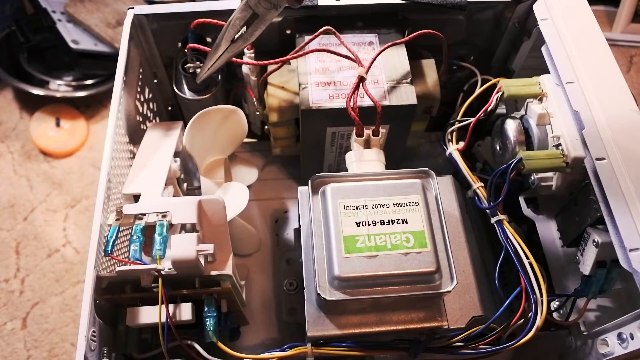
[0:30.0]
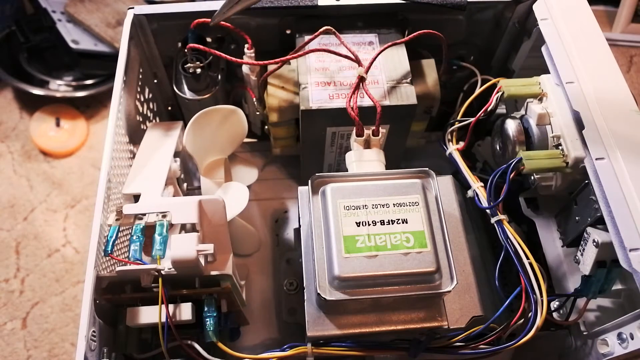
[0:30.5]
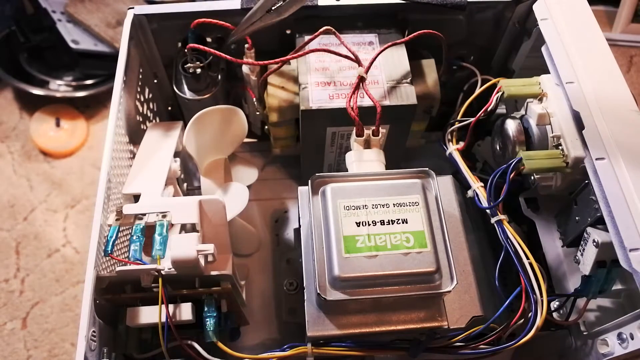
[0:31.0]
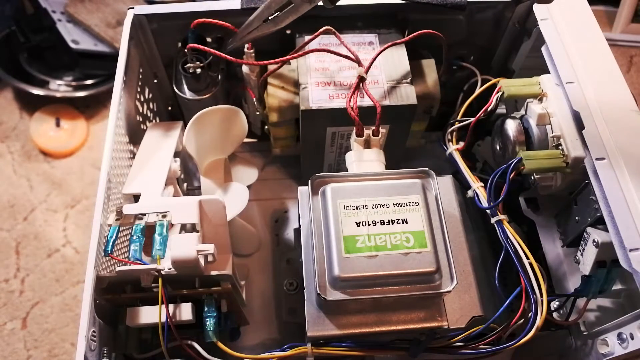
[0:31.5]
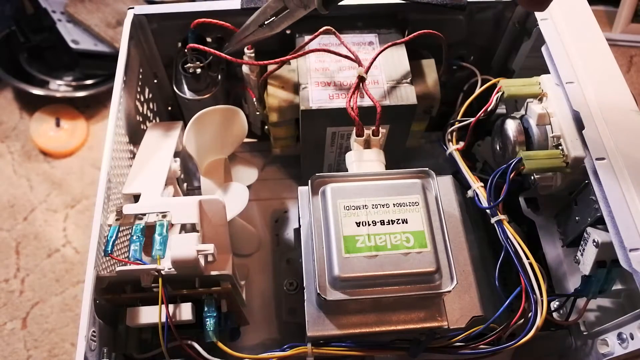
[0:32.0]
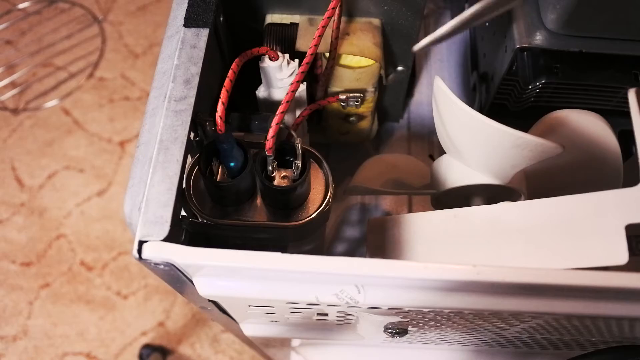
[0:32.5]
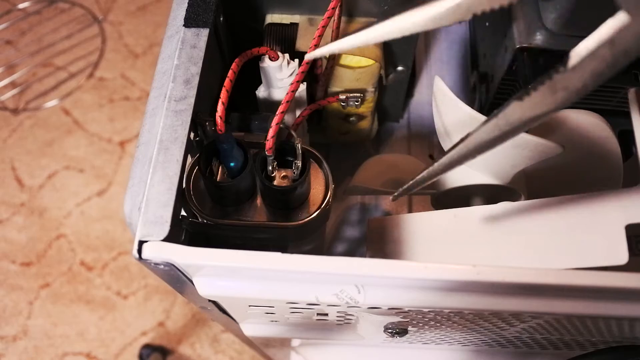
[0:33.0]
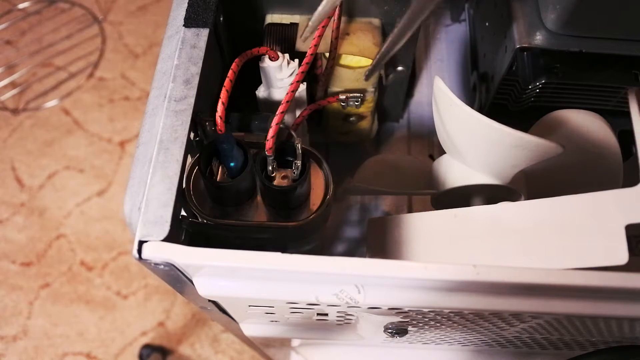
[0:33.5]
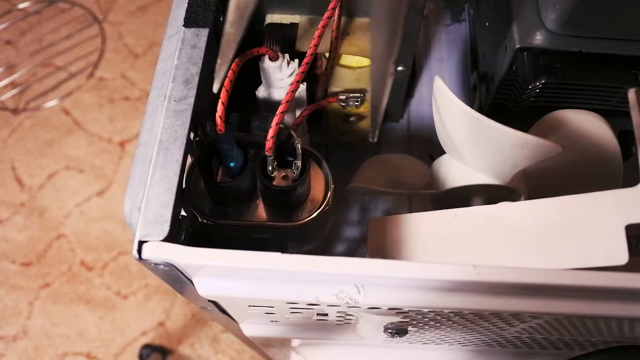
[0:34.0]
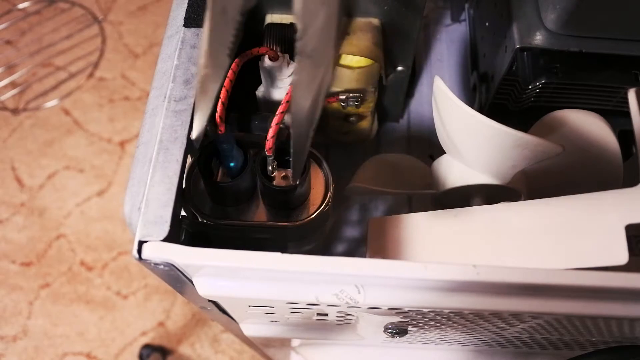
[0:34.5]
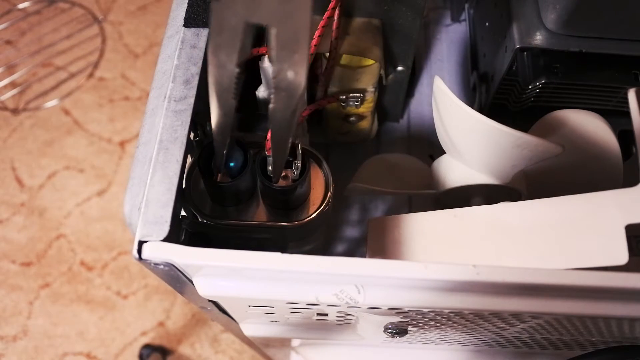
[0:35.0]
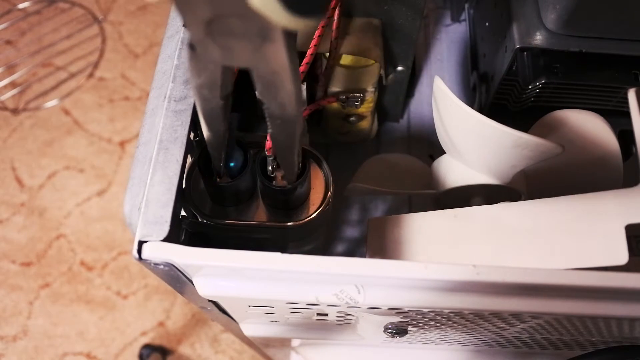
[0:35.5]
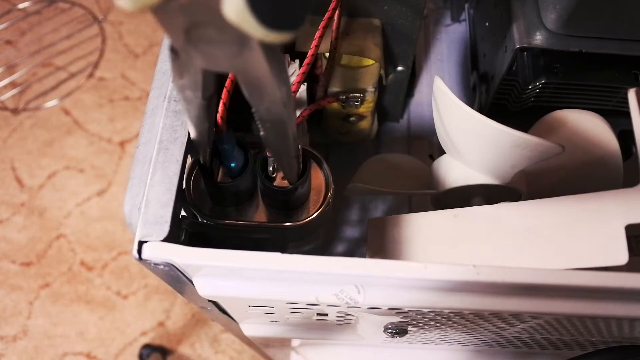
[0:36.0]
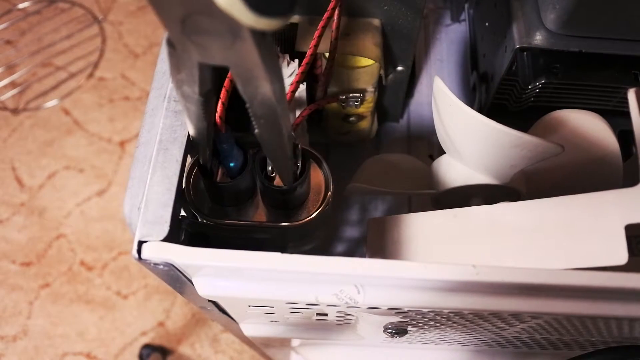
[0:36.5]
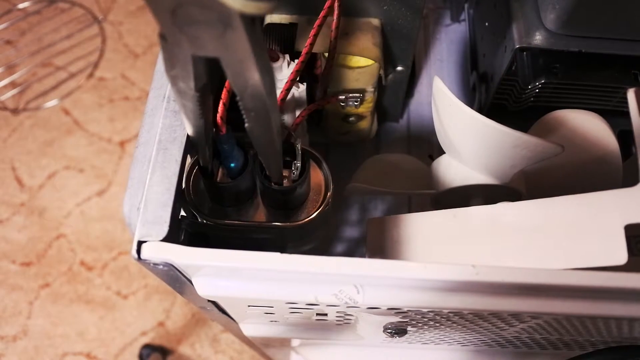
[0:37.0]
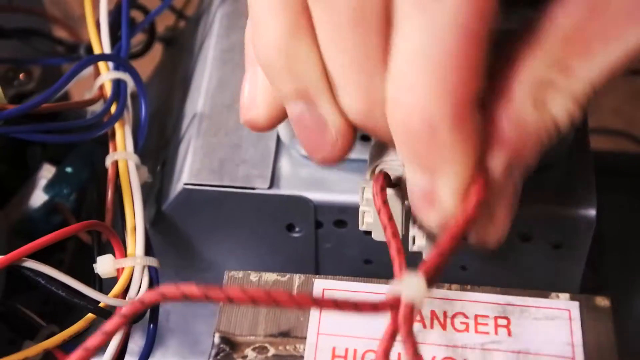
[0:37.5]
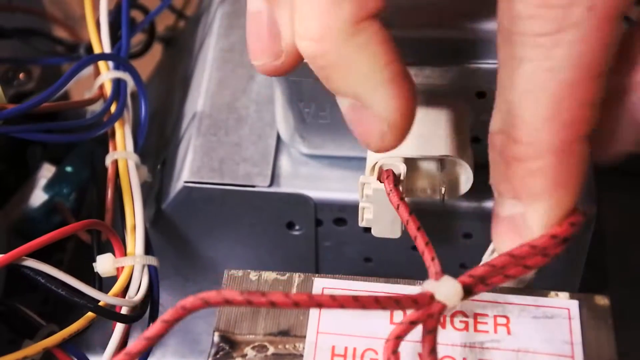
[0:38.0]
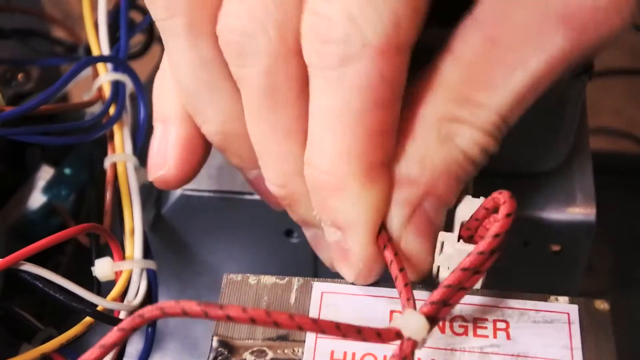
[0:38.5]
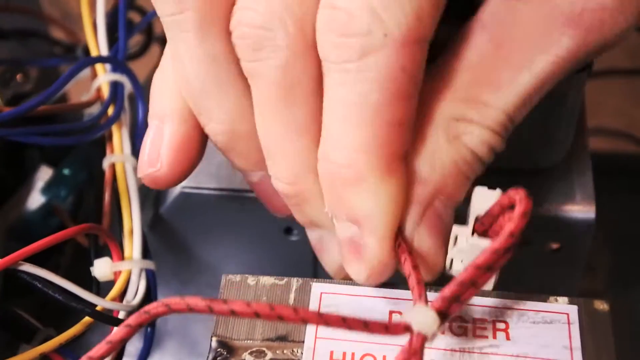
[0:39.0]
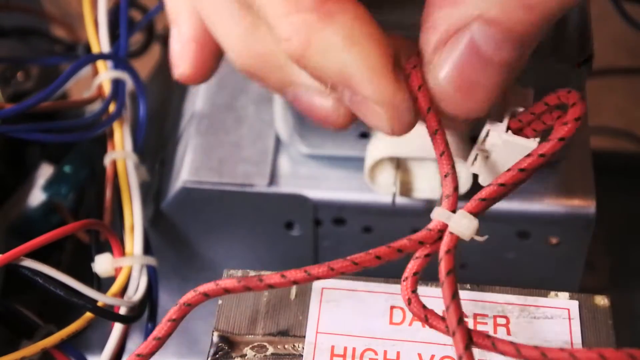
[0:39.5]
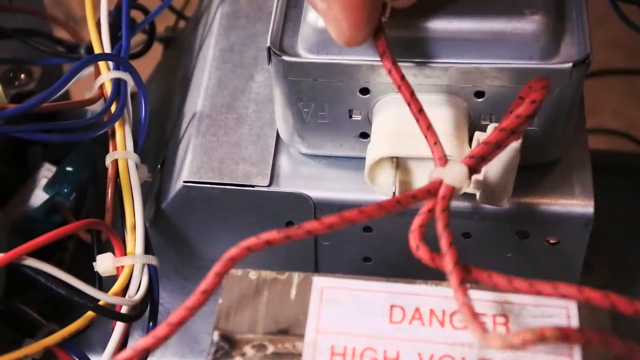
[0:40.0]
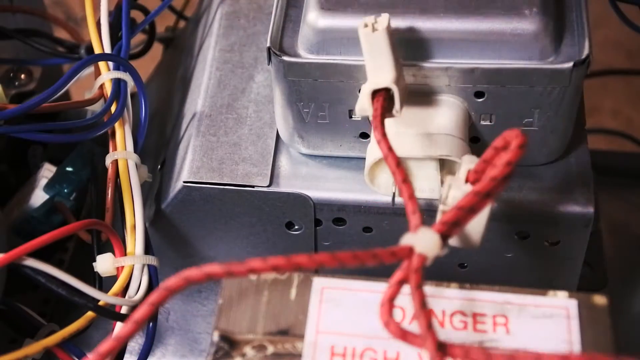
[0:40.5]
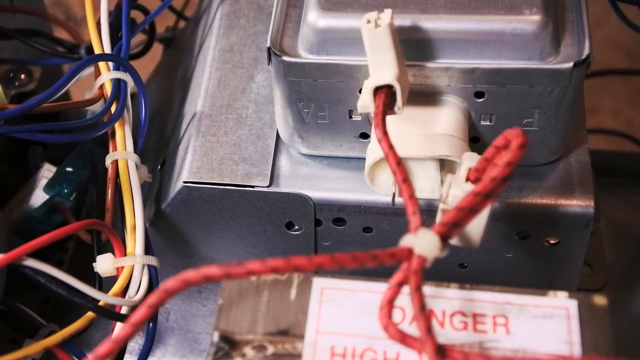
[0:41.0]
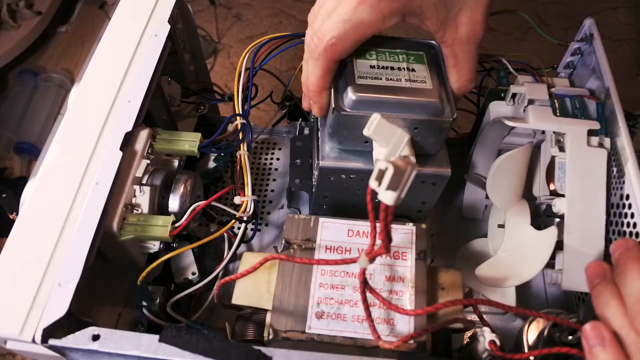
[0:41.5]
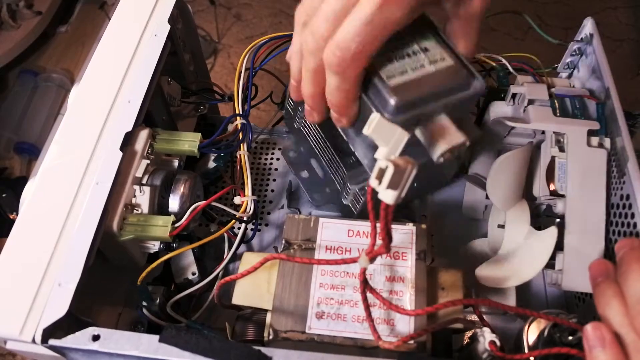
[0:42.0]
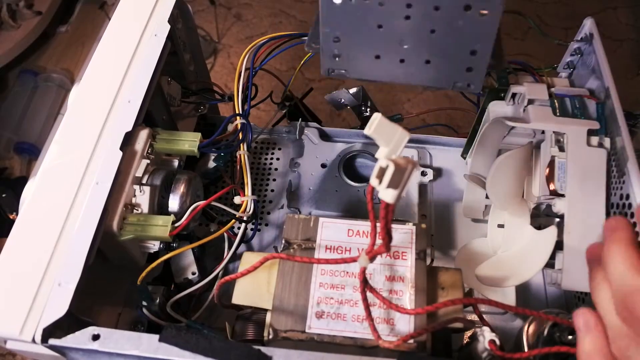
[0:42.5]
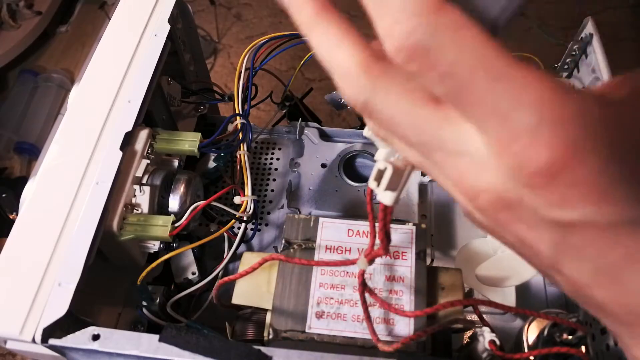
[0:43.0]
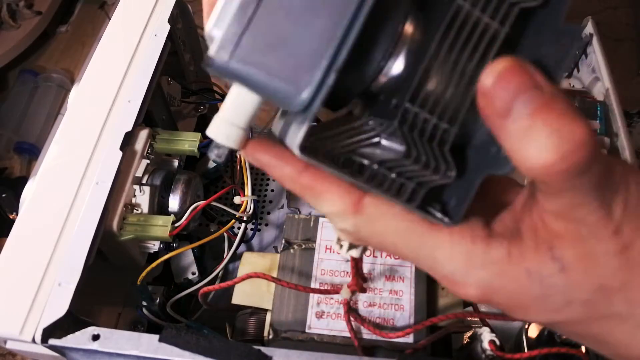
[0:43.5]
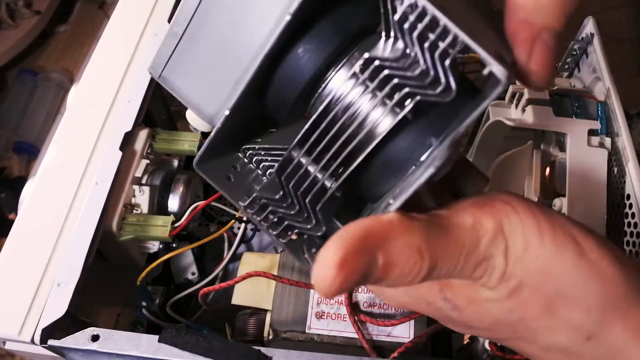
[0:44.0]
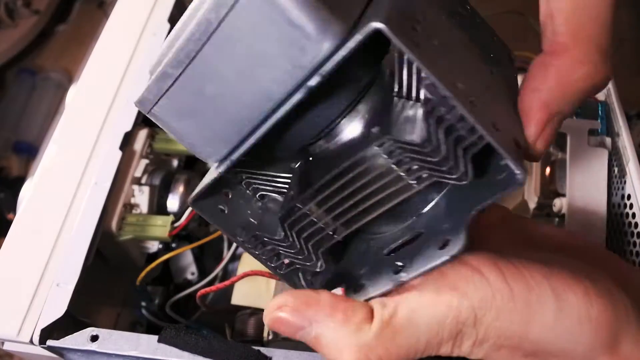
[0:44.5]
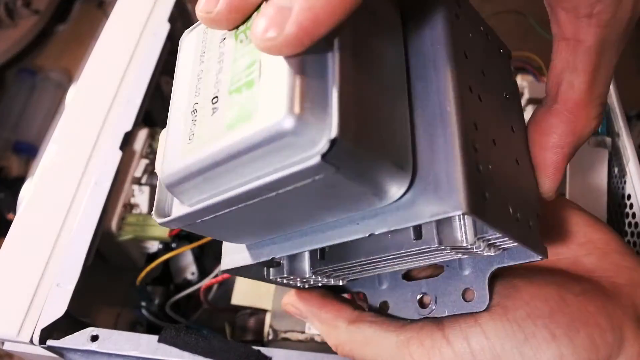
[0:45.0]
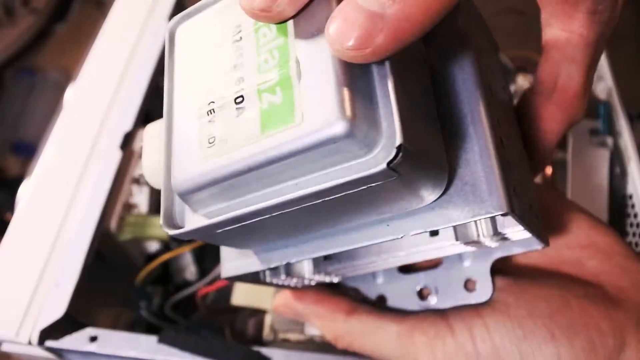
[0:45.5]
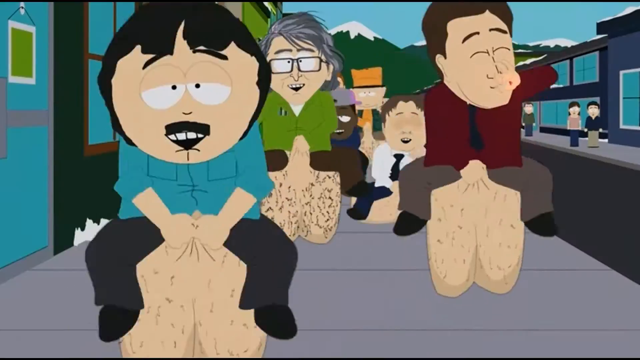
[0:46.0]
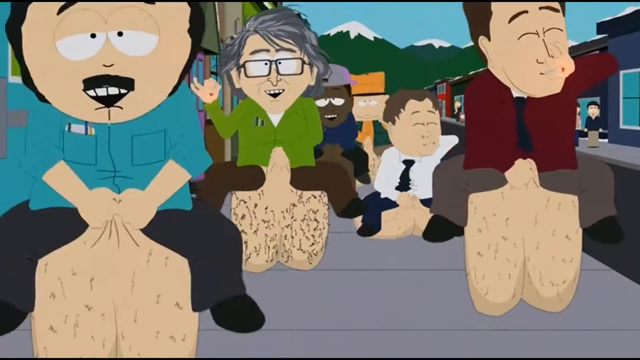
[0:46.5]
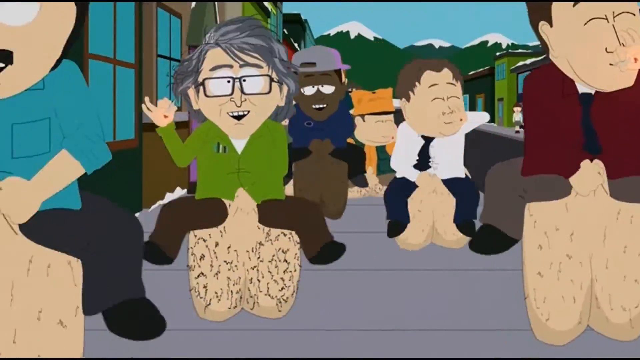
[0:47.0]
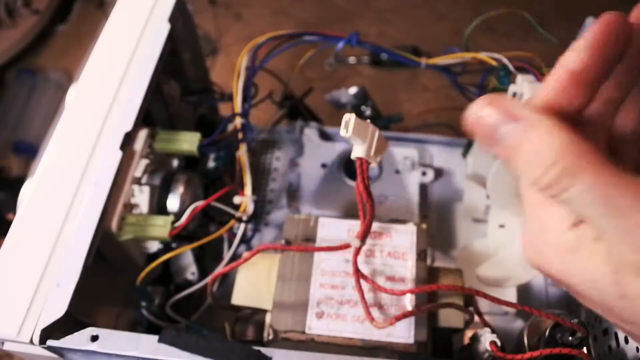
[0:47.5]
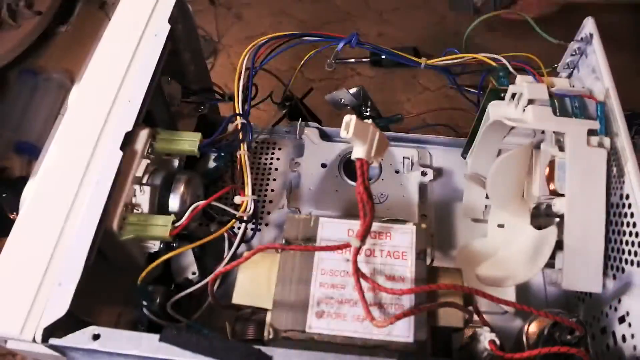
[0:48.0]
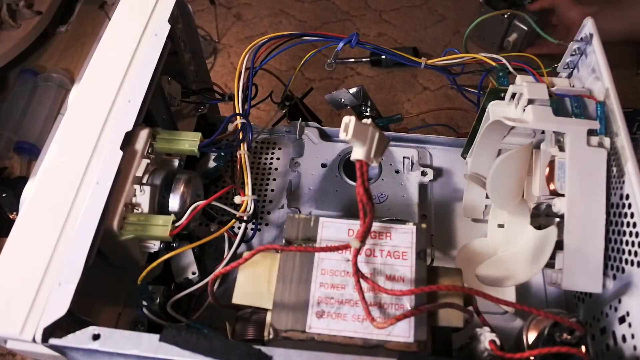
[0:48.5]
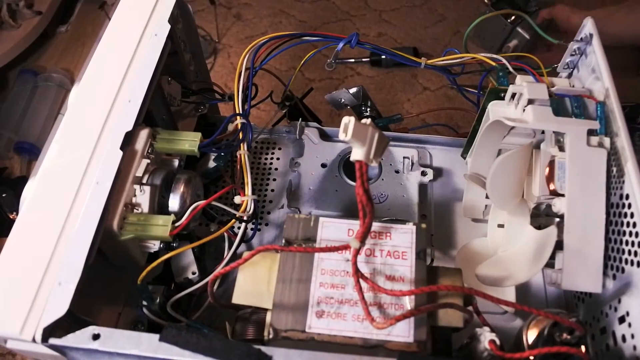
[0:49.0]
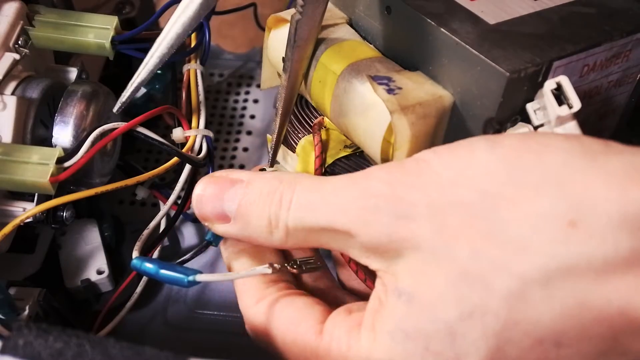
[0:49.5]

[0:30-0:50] A South Park character appears in the corner for a moment. Someone has a foot on top of the microwave, then the person opens the door and a cat runs out as if it had been inside. The person unscrews some screws to take the microwave apart and appears to point out the power supply, showing some cords that connect to it. Someone goes in with pliers to loosen the part around the power supply so that what may be a motor or a fan can be taken out. Some South Park characters are then shown bouncing on balls. The video returns to the microwave, where it looks like some repairs may have been made after disconnecting it.